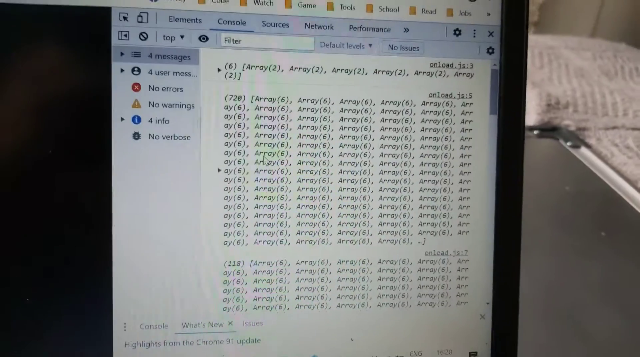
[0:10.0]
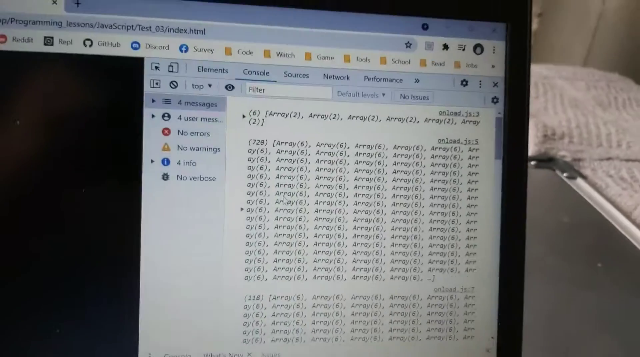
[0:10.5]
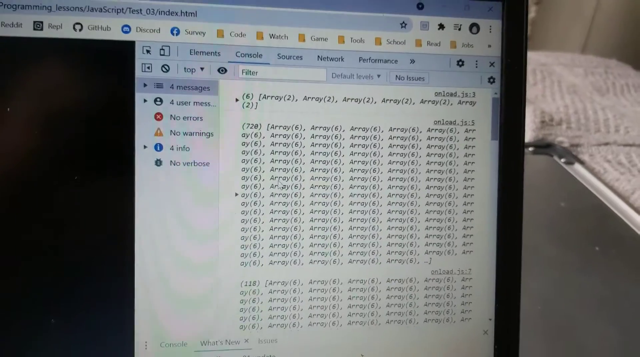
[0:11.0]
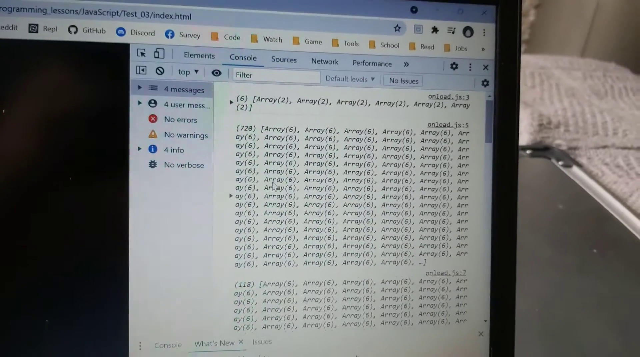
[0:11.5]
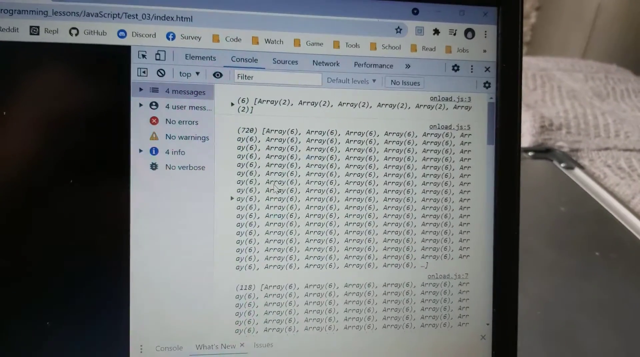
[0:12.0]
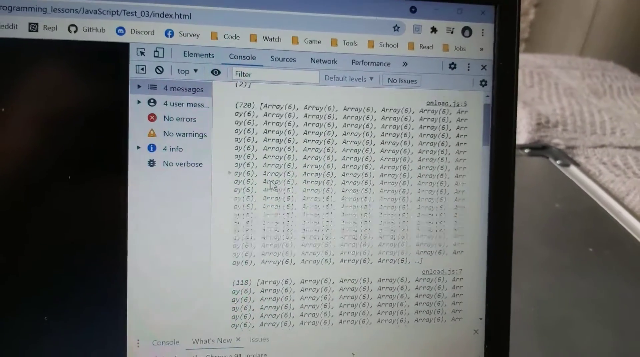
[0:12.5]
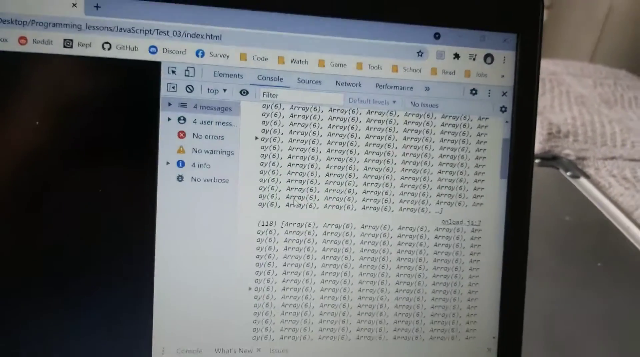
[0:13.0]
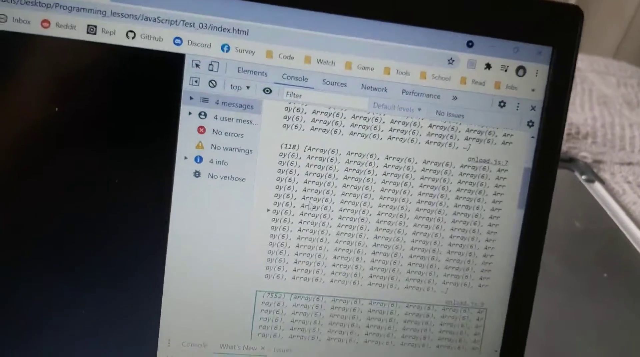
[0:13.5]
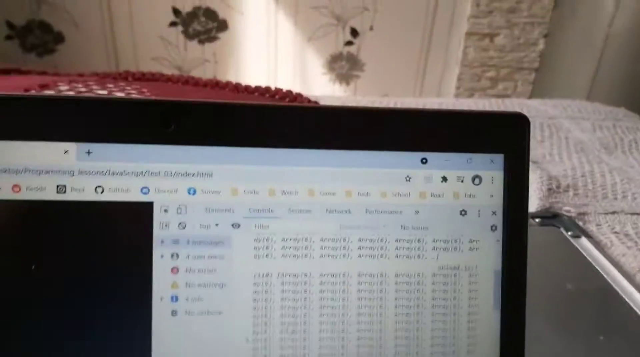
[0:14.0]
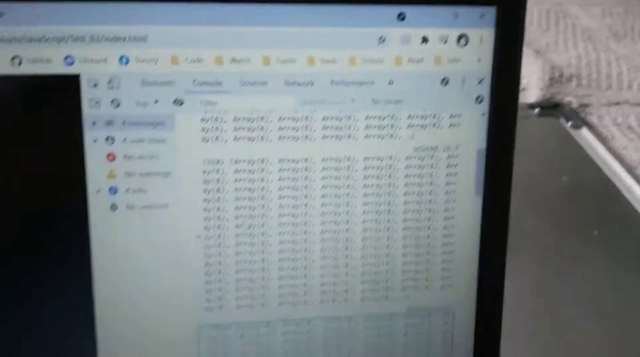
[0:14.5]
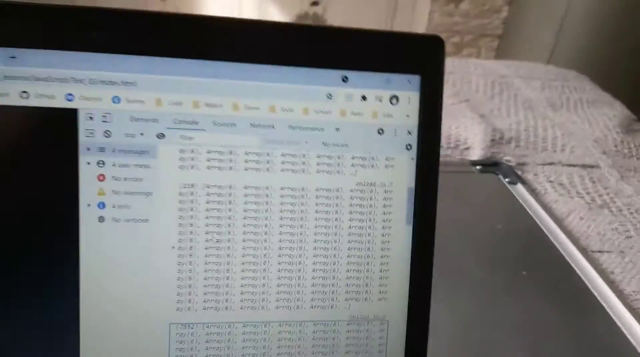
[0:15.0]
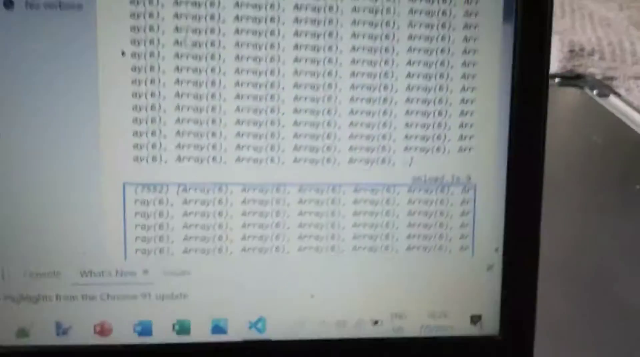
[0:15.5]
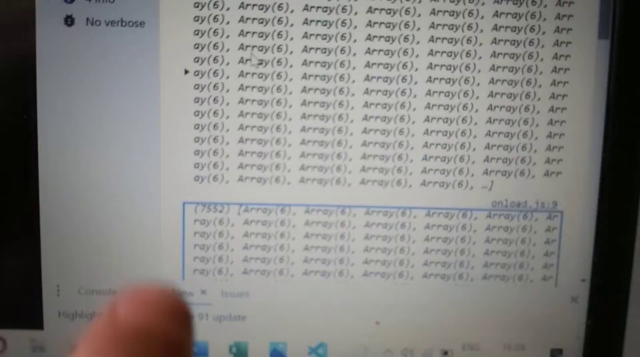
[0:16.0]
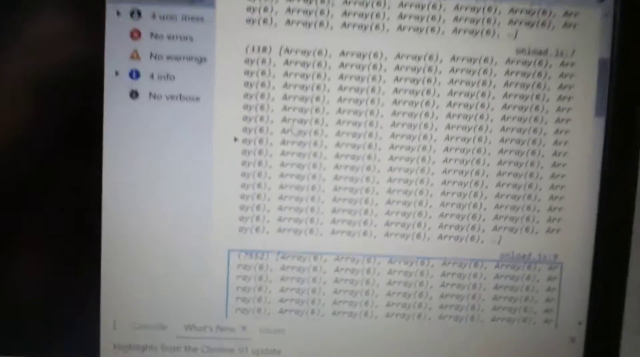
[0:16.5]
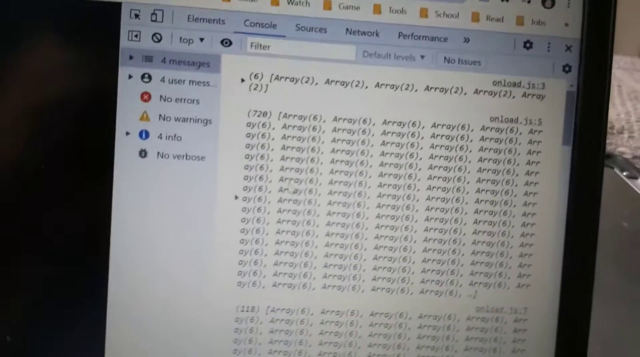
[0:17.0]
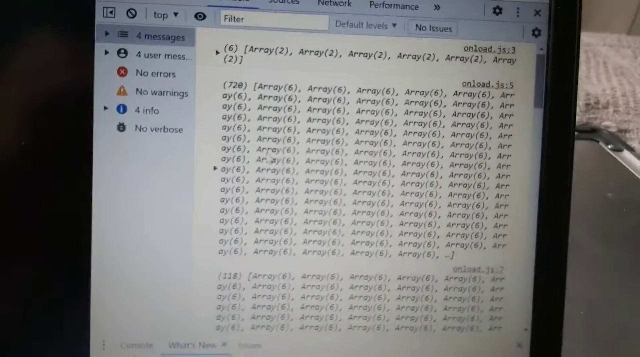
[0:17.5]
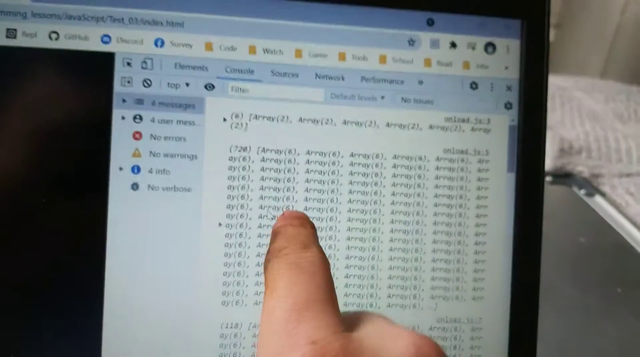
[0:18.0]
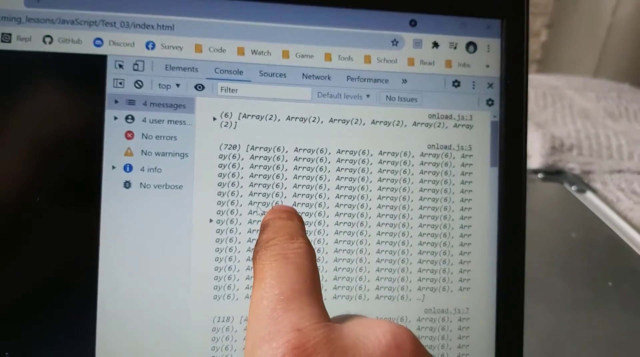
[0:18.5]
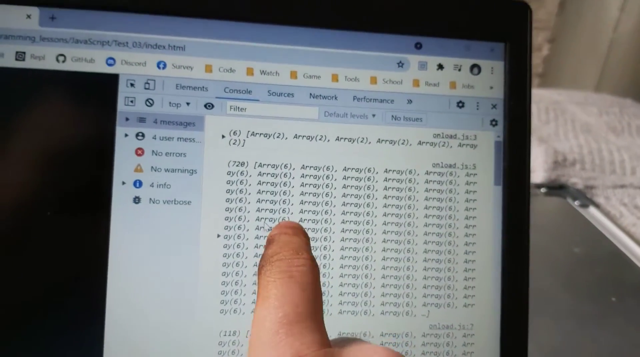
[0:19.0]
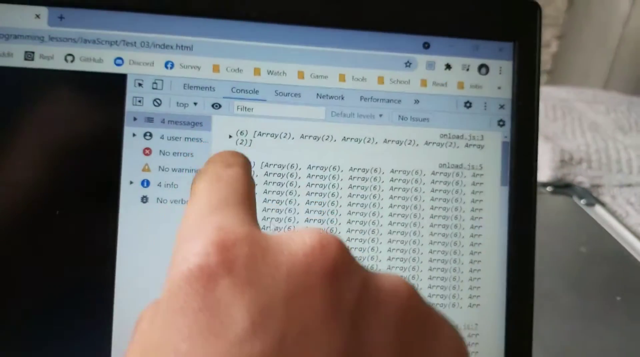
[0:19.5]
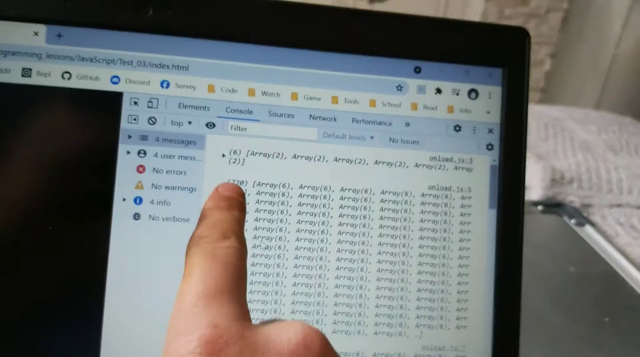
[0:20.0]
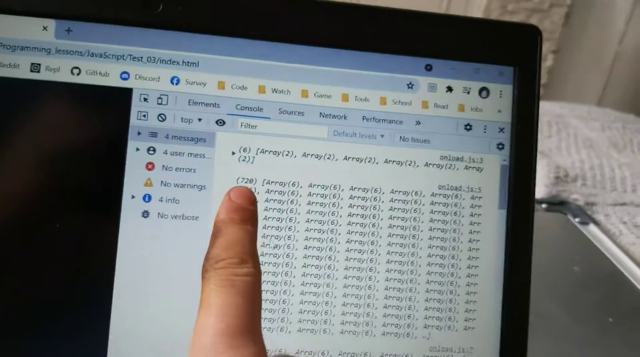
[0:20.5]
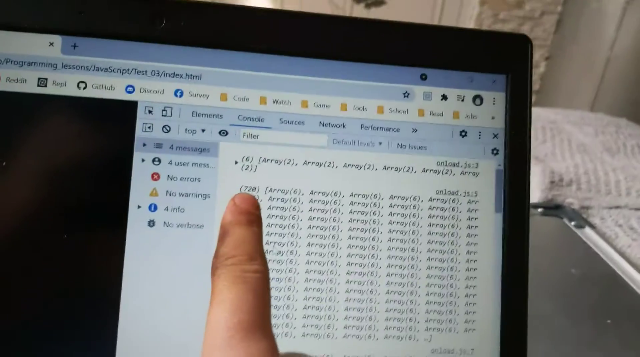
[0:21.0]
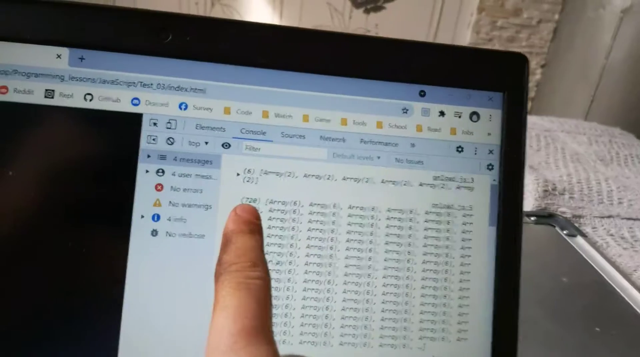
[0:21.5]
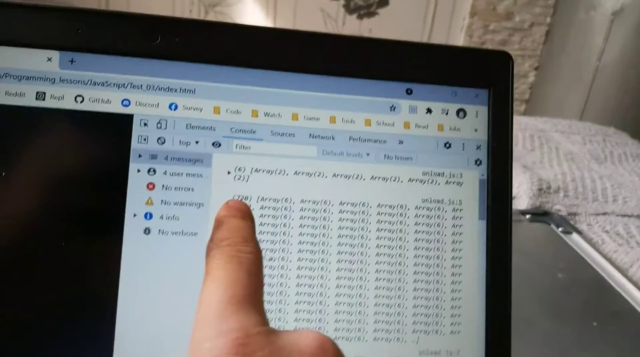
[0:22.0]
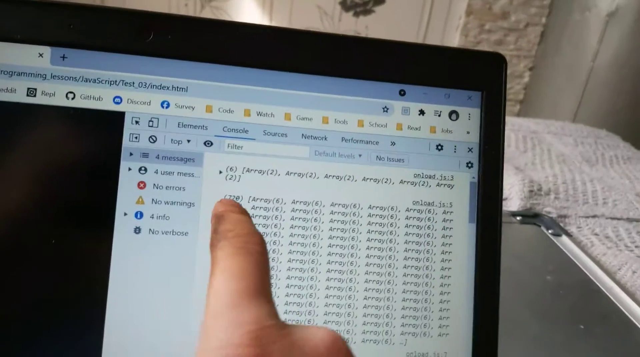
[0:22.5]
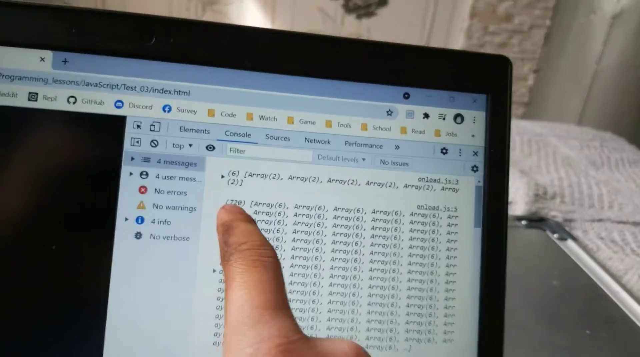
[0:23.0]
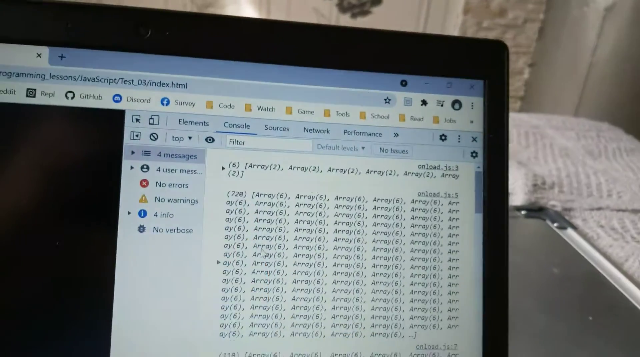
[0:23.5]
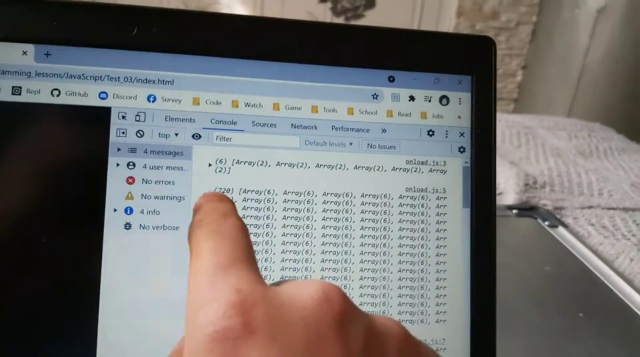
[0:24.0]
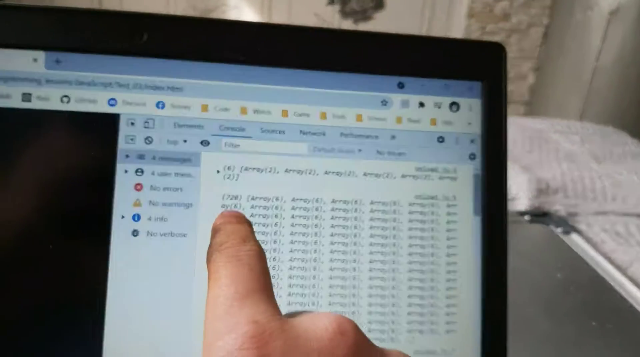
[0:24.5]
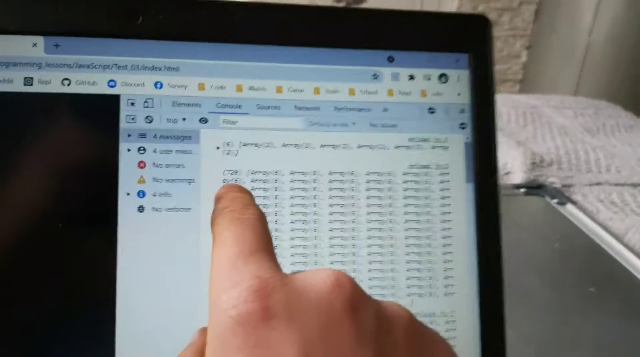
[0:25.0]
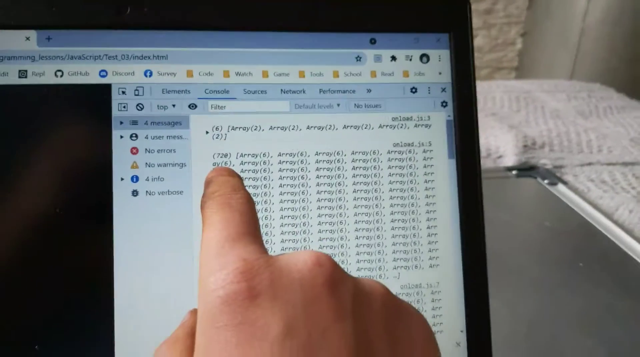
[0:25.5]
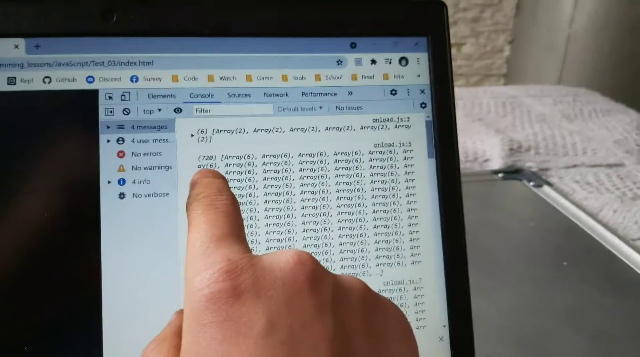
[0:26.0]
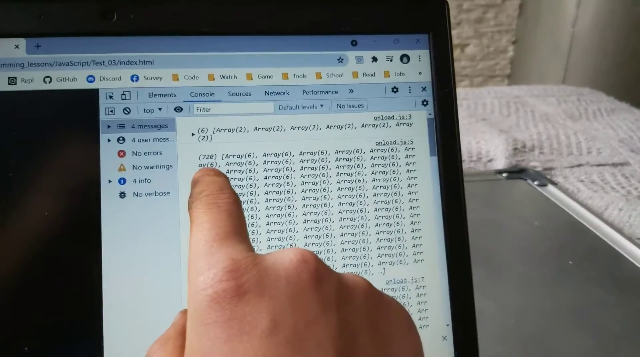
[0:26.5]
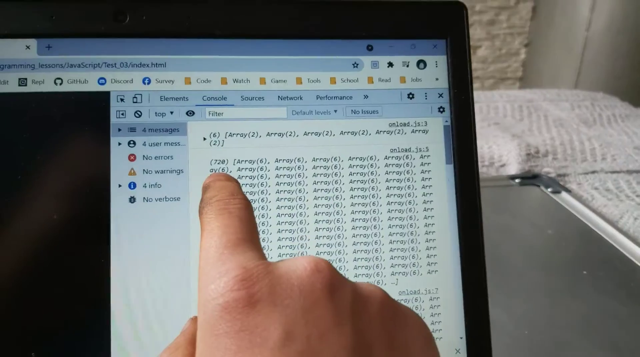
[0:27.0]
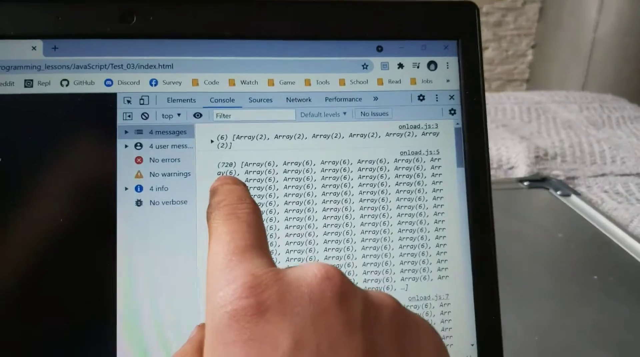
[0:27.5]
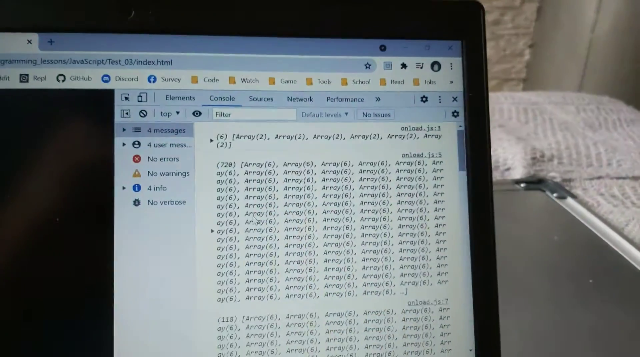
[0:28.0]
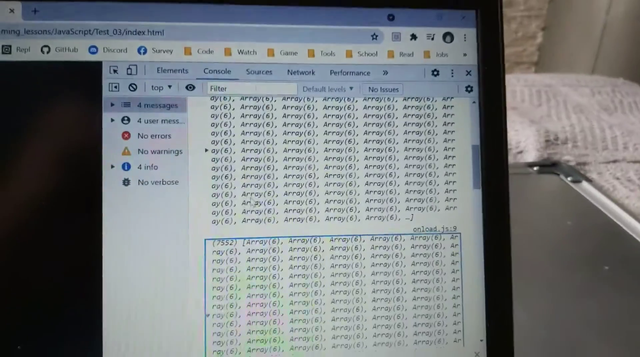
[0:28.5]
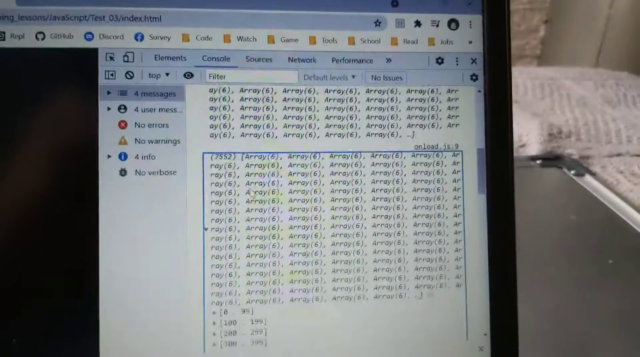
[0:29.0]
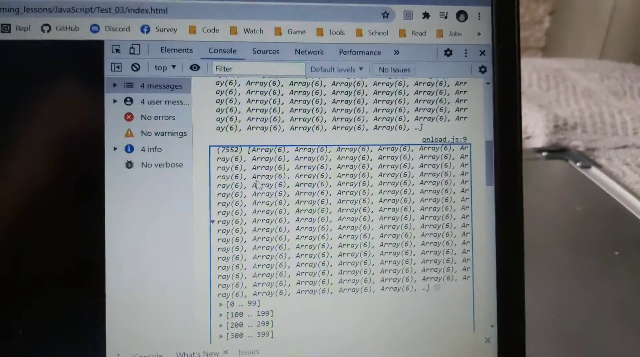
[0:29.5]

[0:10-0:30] A phone films a laptop, and the hand holding it shakes quite a bit. The laptop is sitting on a table, perhaps on a bed, in what looks like a bedroom, with a white chenille blanket in the background and wooden walls behind. Up close on the screen, a column on the left side shows four messages for users, "no errors", "no warnings" and "no verbose". Along the top, the columns read from left to right "elements", then "console", which is currently open and shows the word "array" over and over, then "sources", "network" and "performance". The left side of the screen is solid black. A hand comes up from the bottom of the frame and points its fingers at a line of information; it looks to be a man's right hand.